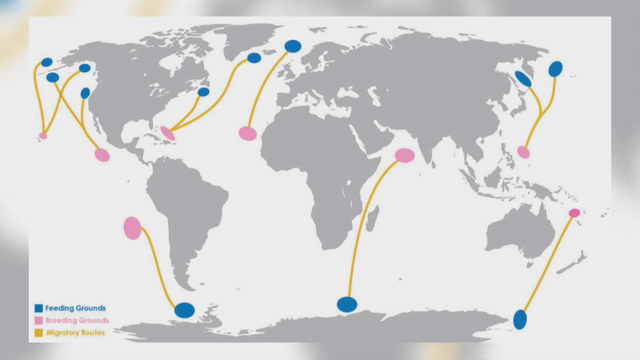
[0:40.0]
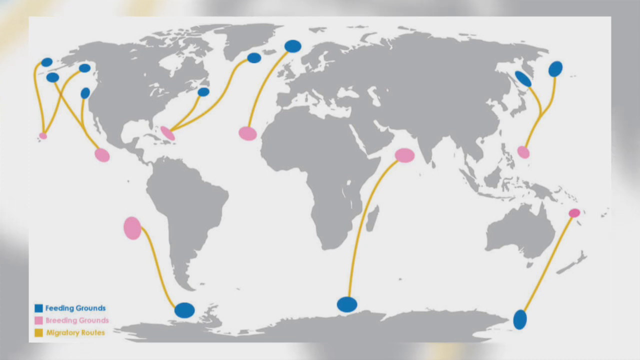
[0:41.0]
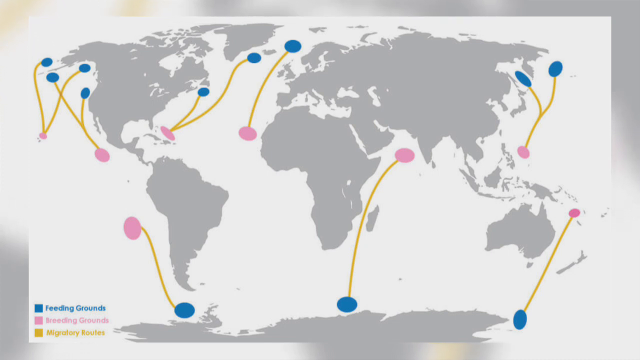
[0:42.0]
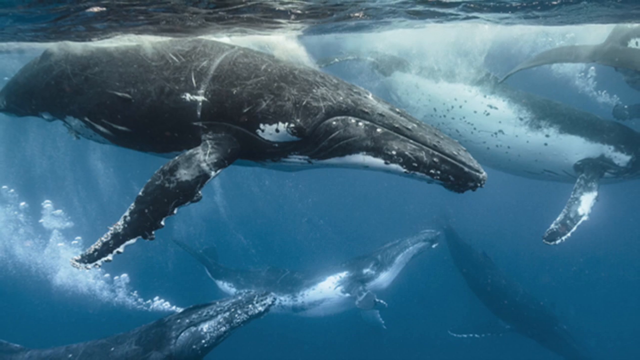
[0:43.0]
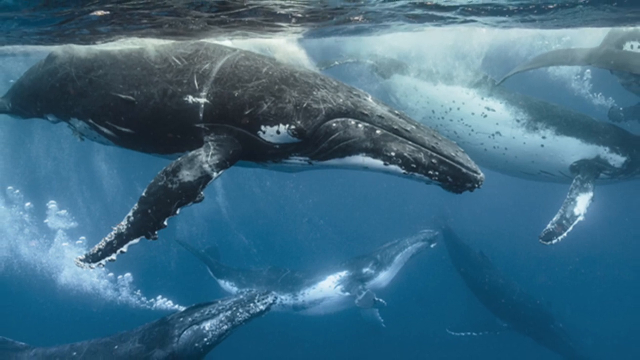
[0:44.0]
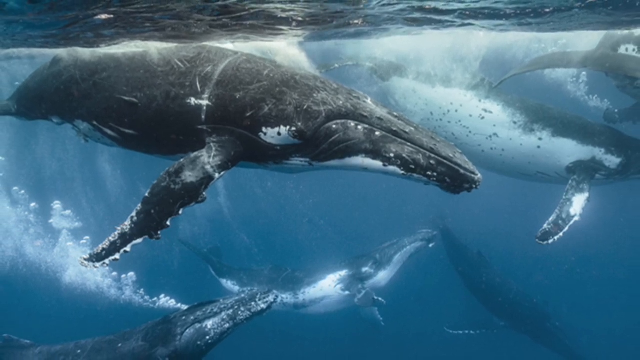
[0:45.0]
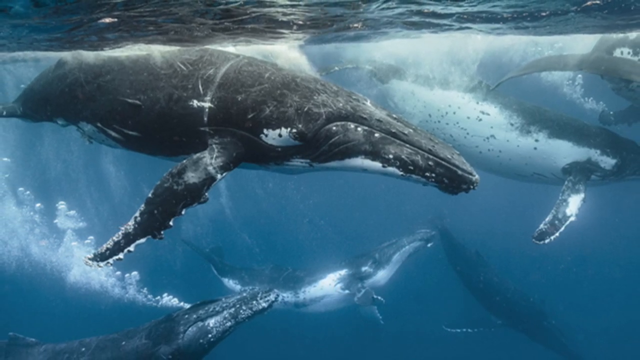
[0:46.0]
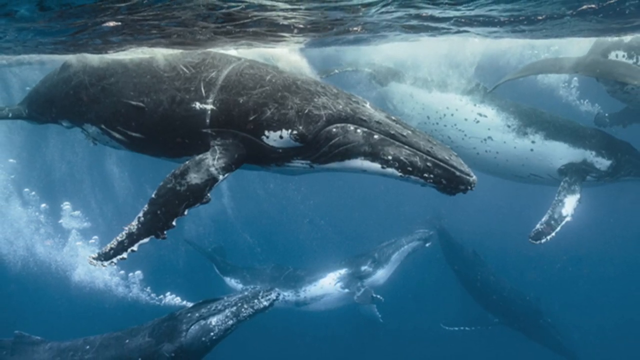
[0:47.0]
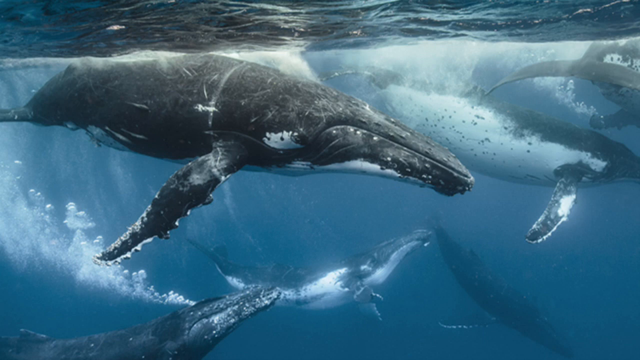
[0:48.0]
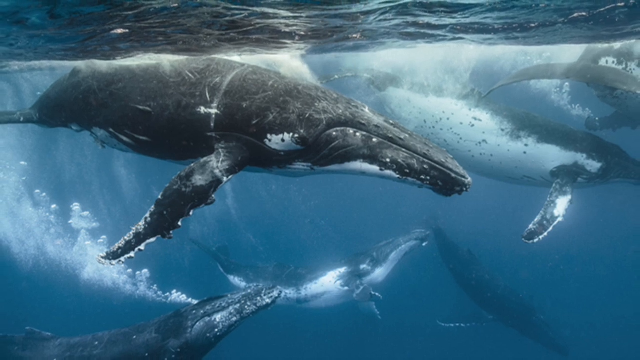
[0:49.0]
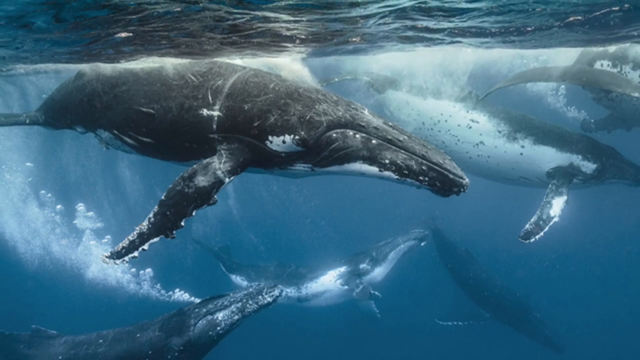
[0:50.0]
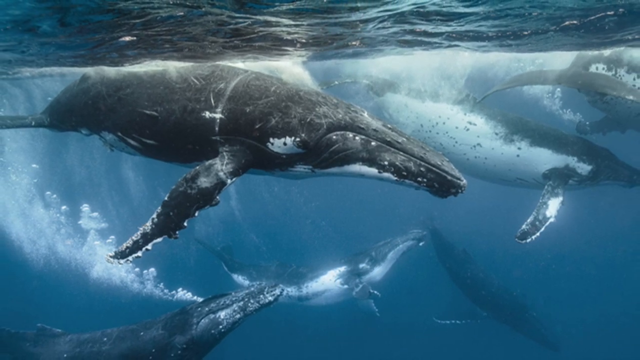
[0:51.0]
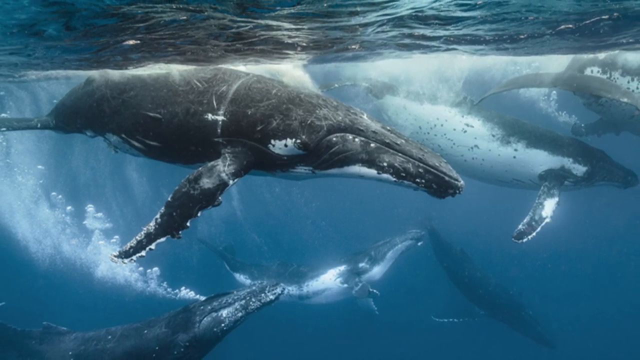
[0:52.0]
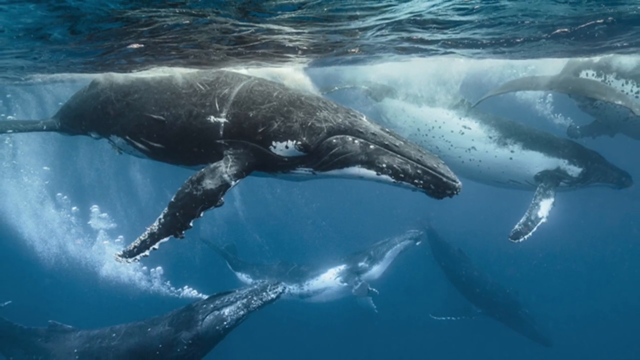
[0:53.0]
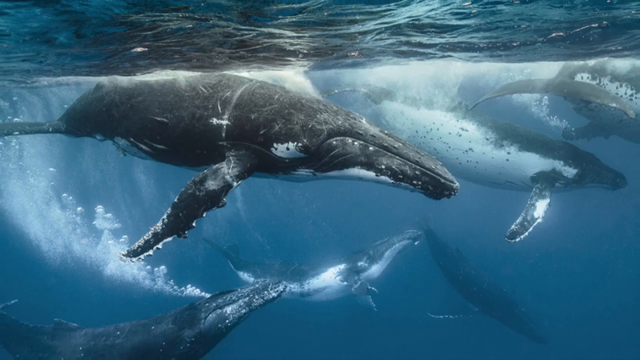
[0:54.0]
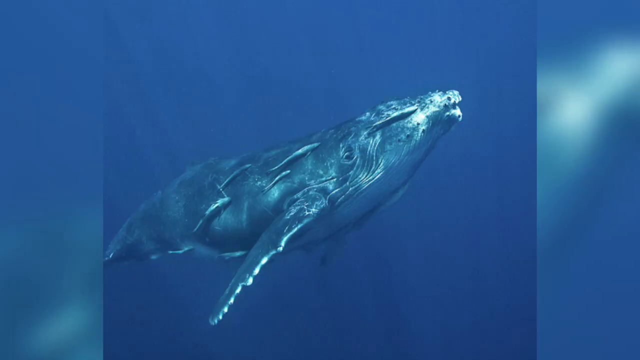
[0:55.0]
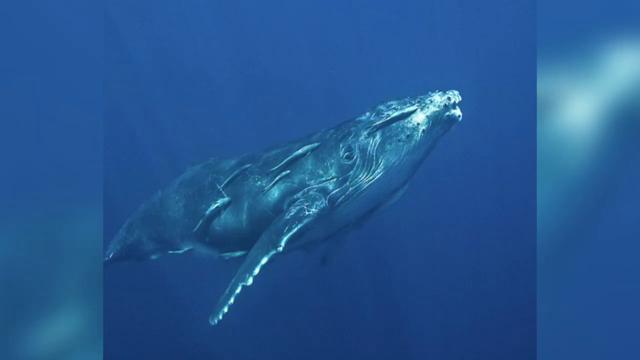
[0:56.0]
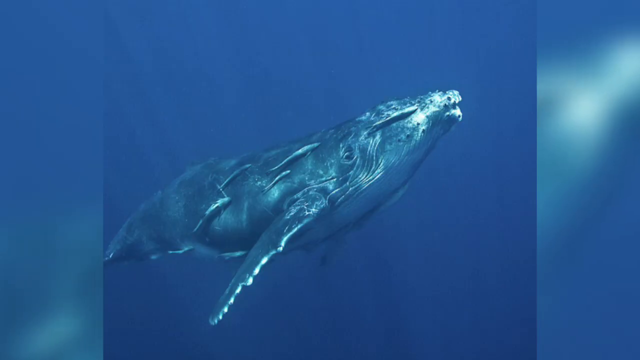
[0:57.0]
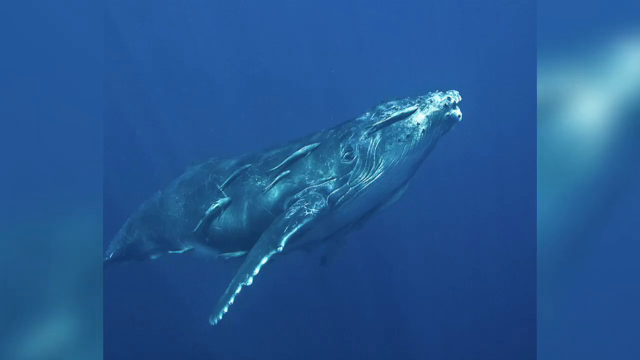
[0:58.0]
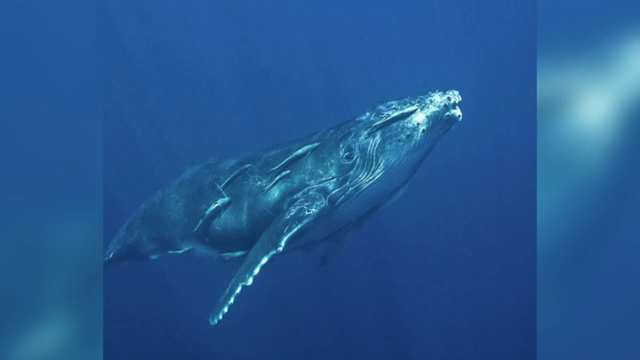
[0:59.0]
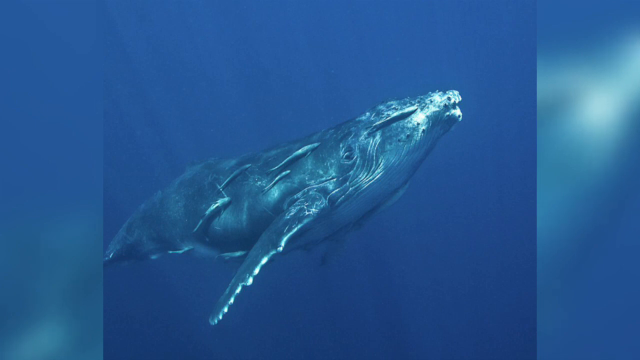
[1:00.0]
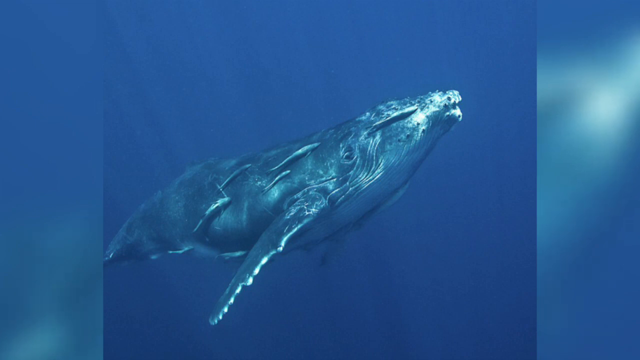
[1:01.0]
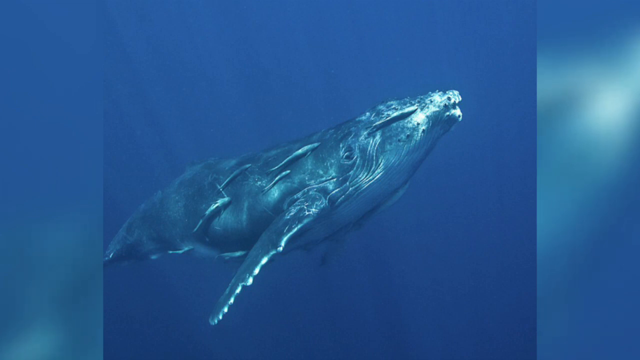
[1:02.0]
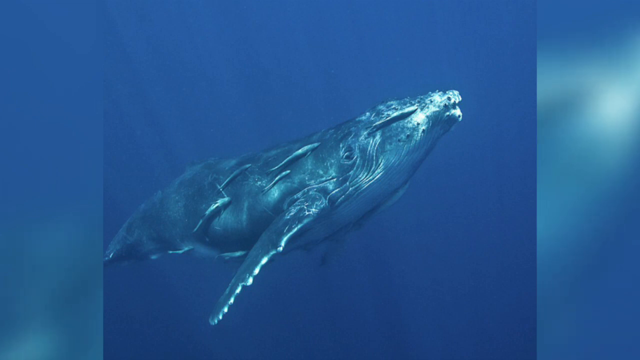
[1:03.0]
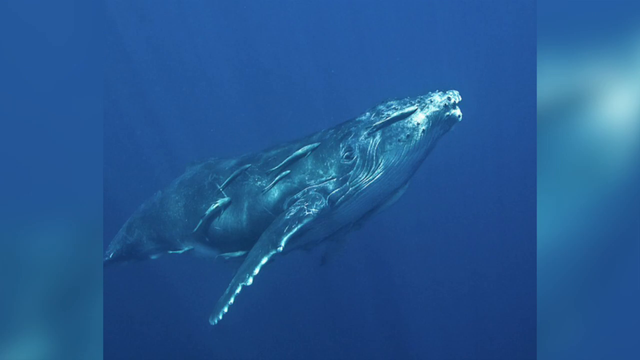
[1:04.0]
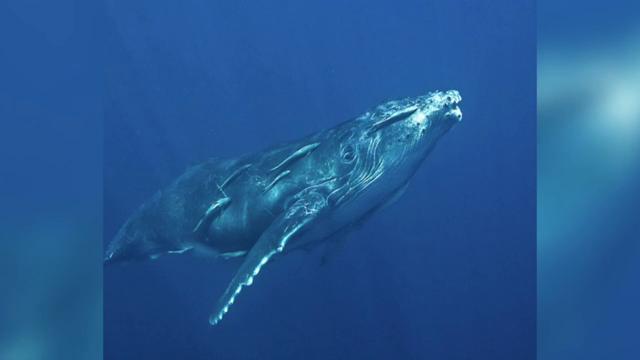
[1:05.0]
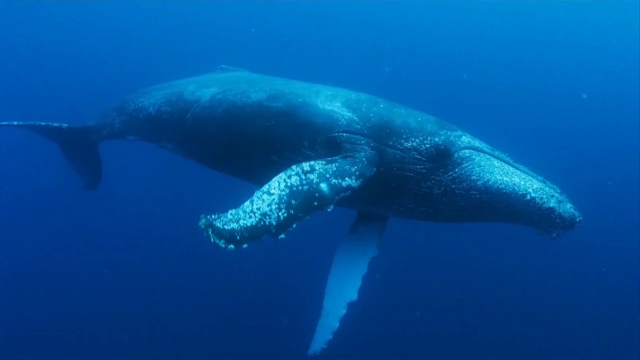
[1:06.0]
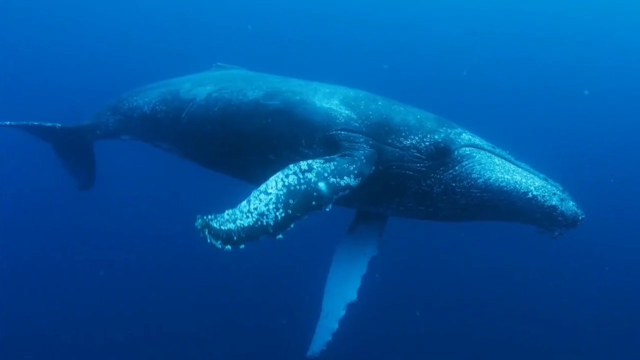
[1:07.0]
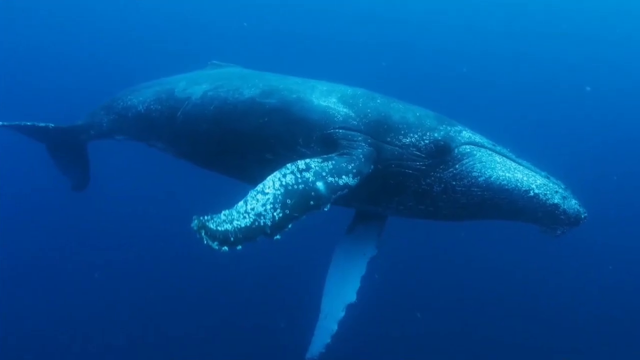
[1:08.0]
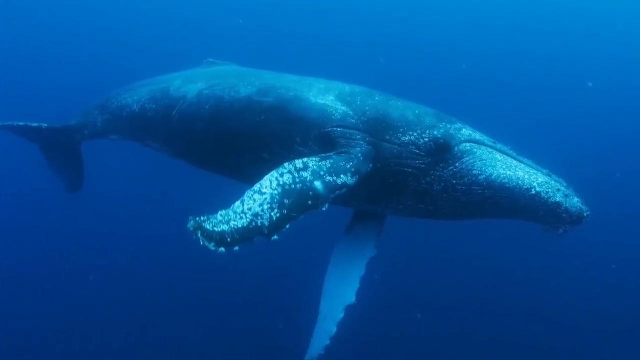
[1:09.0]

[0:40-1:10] A geographical map of the whole world occupies almost the entire frame. The emerged lands are a fairly light gray, while the seas, oceans and lakes are white. At several points on the map there are graphs with blue and pink spheres and curved segments connecting them. Next comes an image of different types of large fish swimming in the depths of the sea. Then an image of a large whale swimming underwater appears against a very intense blue background; the image does not occupy the entire frame, and the left and right ends of the frame have a bluish-blue background. Another image of another whale, also underwater, follows; this photo approaches the camera very slowly, rotating slowly counterclockwise.